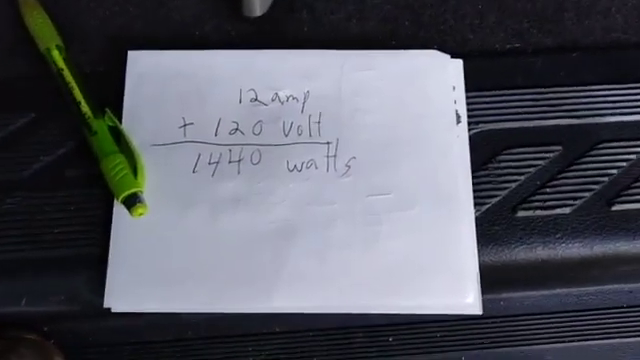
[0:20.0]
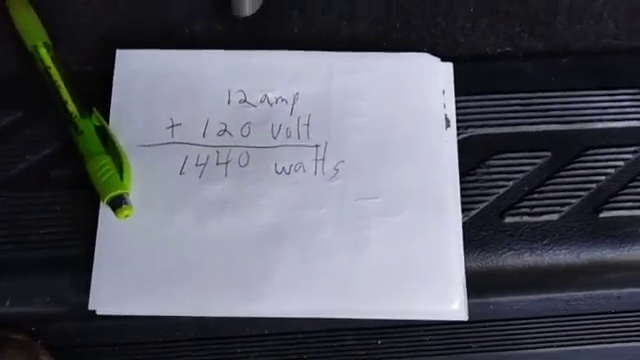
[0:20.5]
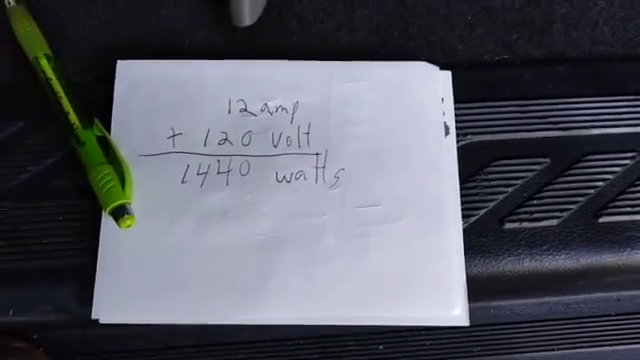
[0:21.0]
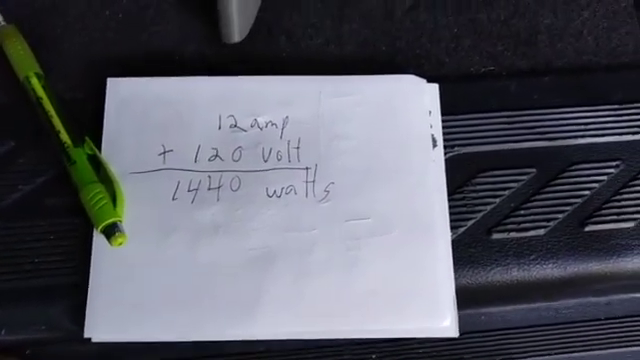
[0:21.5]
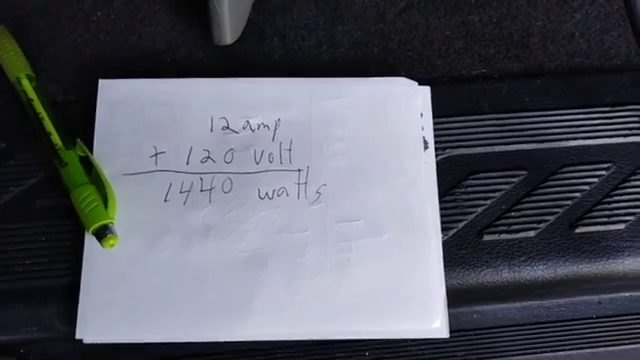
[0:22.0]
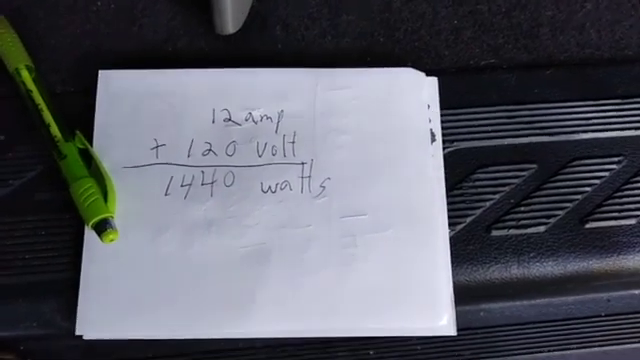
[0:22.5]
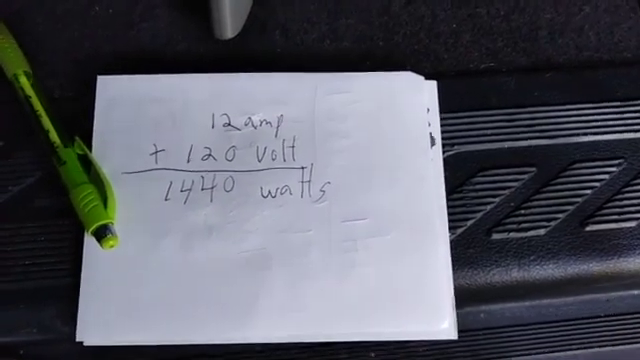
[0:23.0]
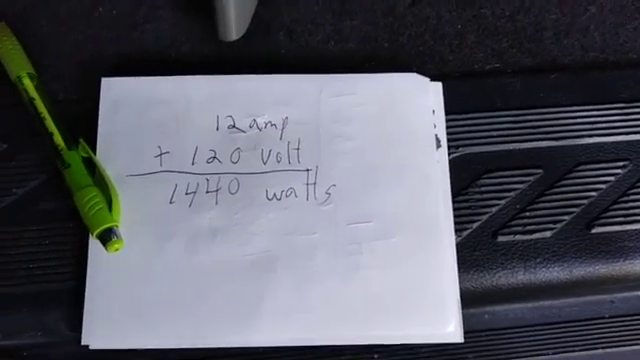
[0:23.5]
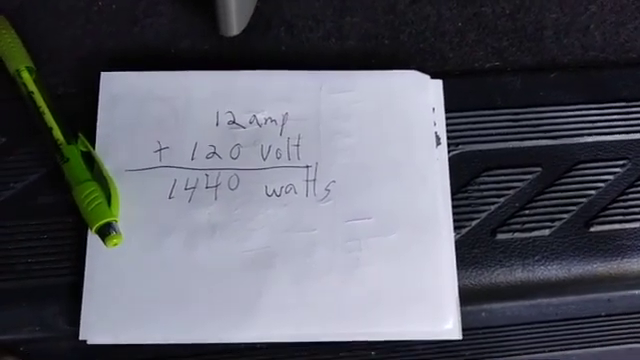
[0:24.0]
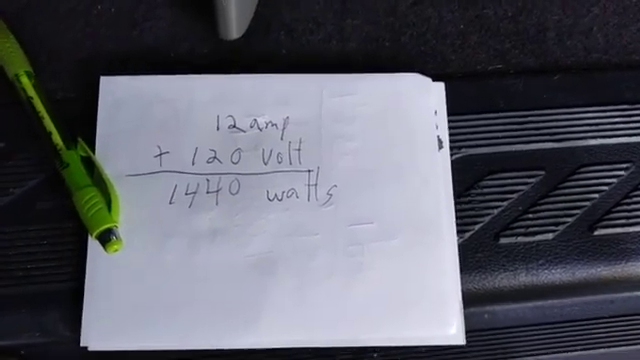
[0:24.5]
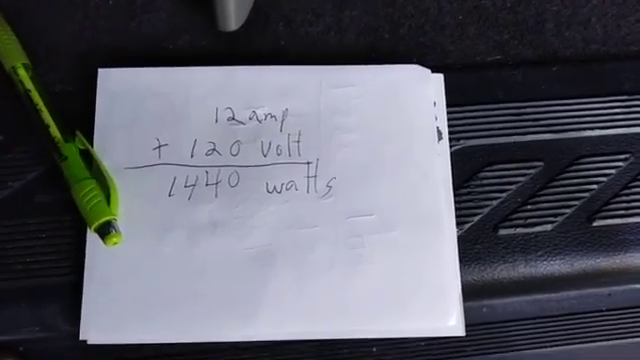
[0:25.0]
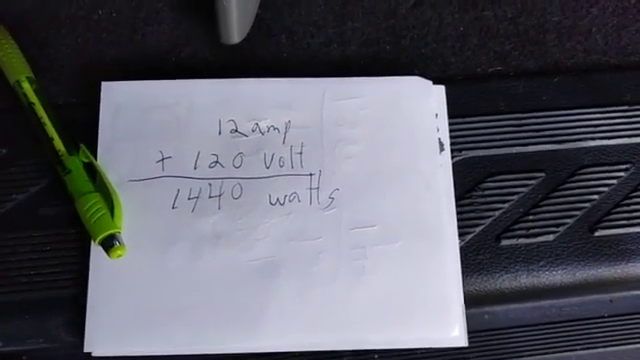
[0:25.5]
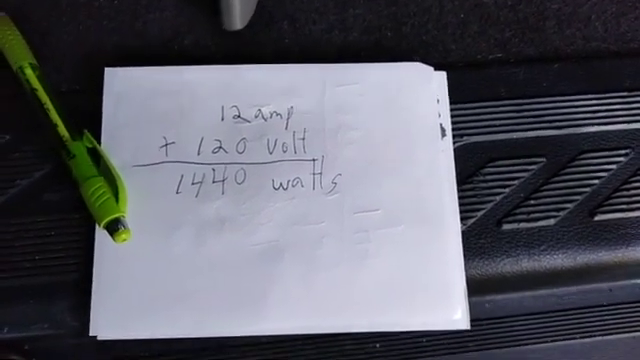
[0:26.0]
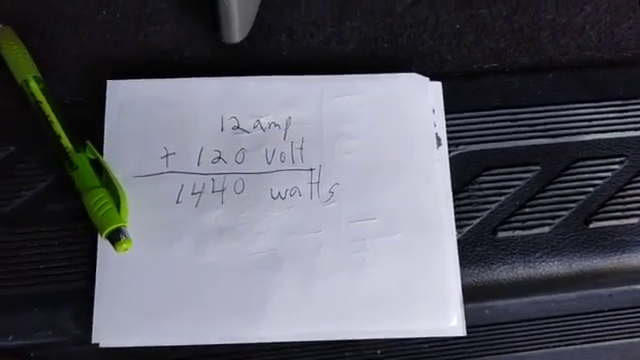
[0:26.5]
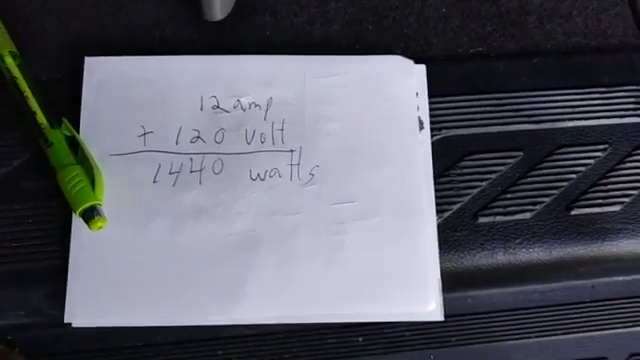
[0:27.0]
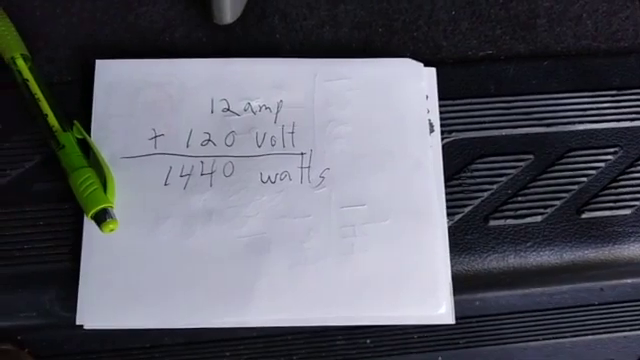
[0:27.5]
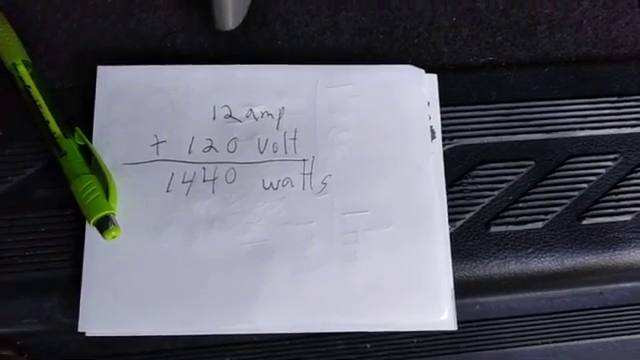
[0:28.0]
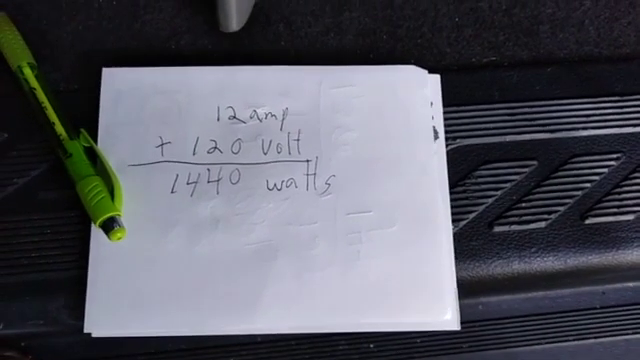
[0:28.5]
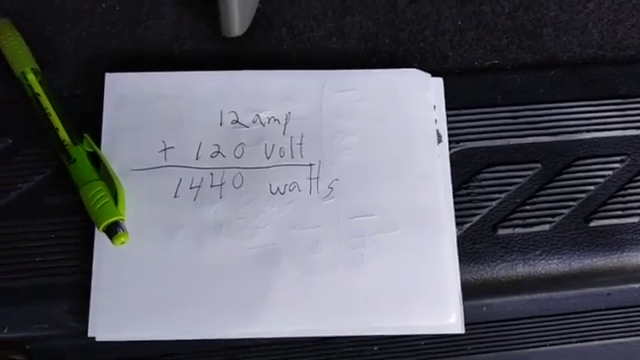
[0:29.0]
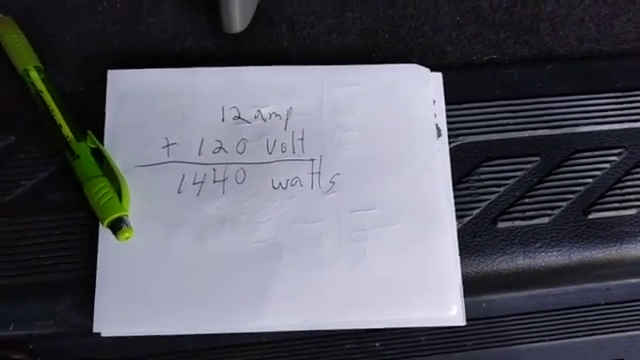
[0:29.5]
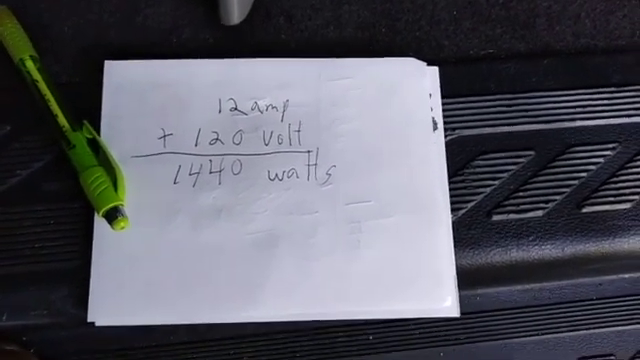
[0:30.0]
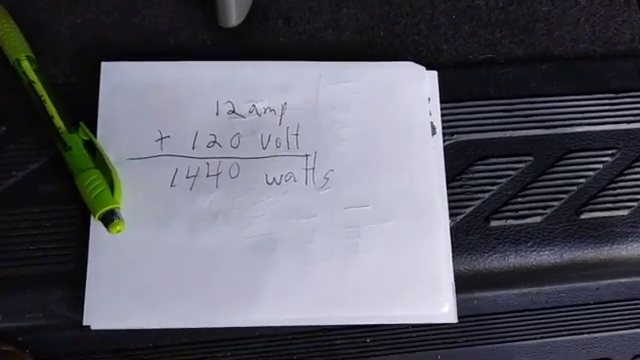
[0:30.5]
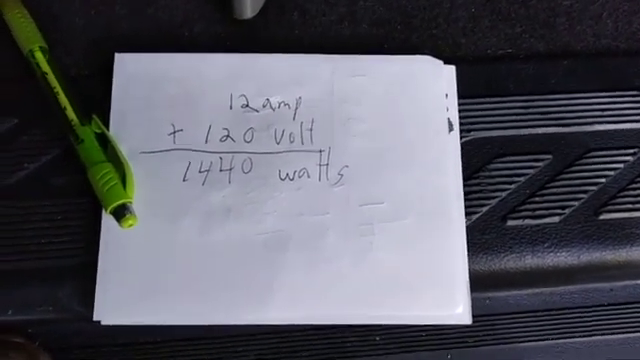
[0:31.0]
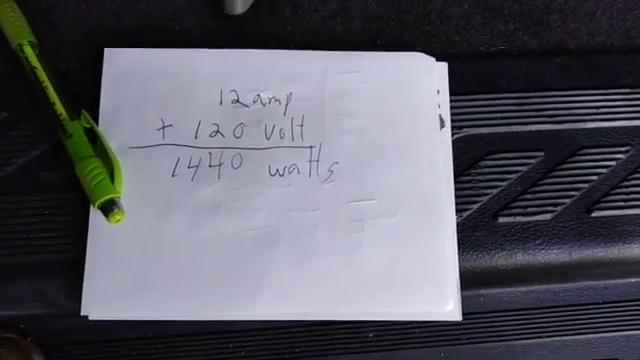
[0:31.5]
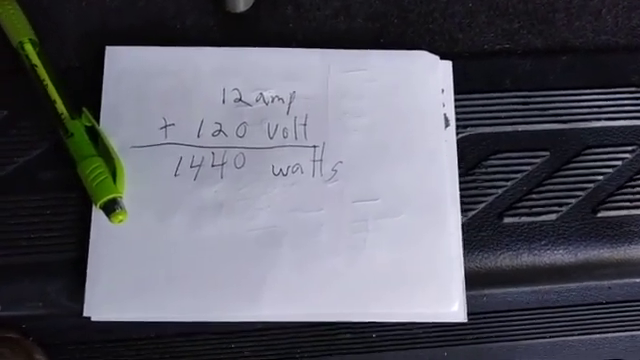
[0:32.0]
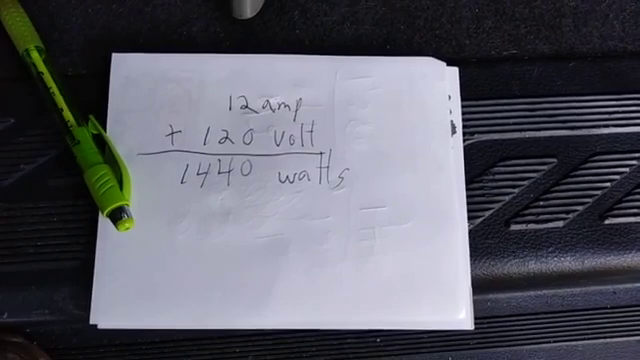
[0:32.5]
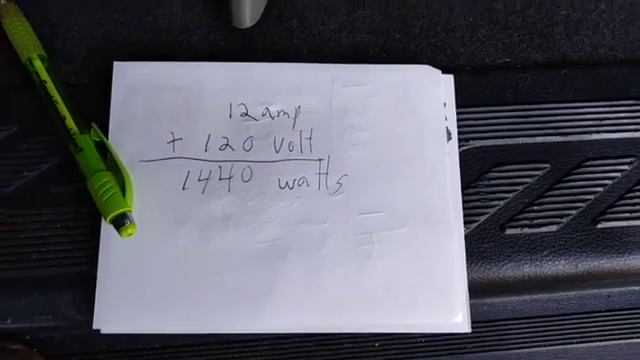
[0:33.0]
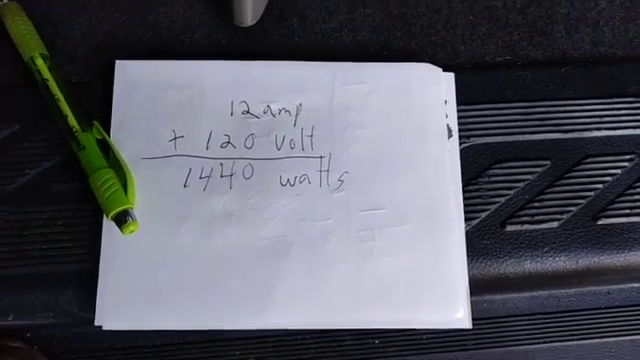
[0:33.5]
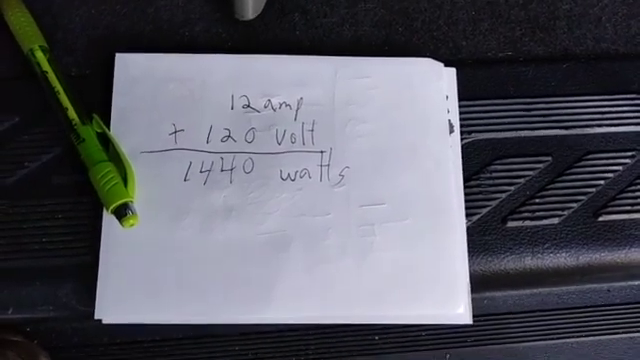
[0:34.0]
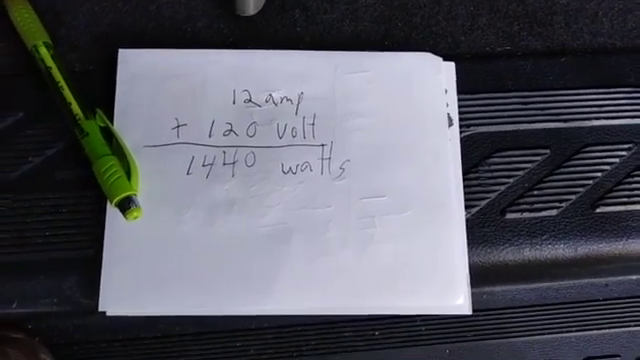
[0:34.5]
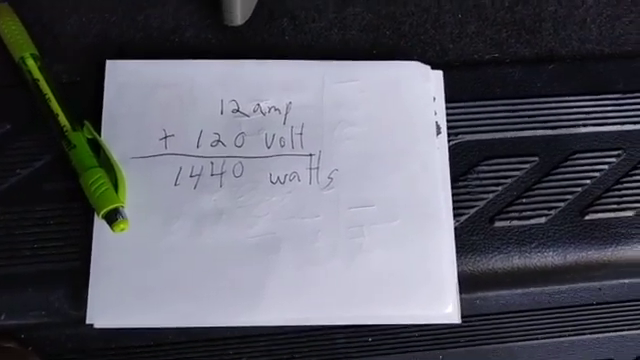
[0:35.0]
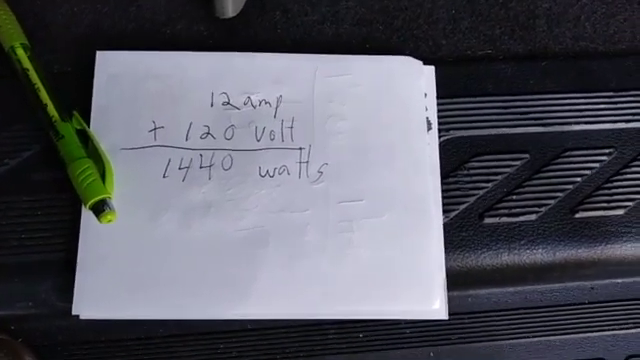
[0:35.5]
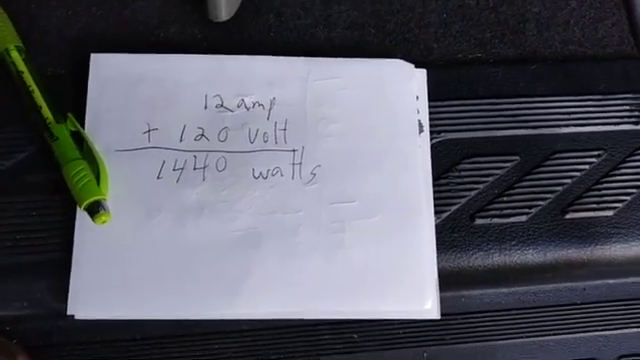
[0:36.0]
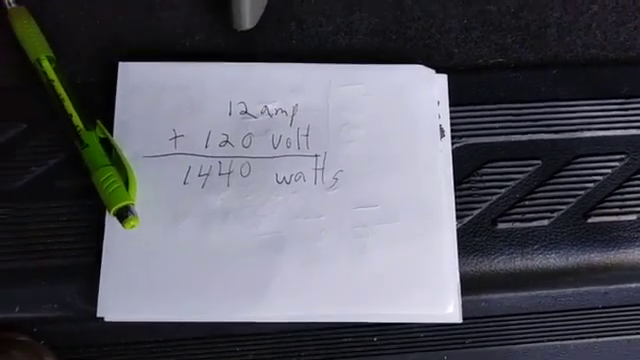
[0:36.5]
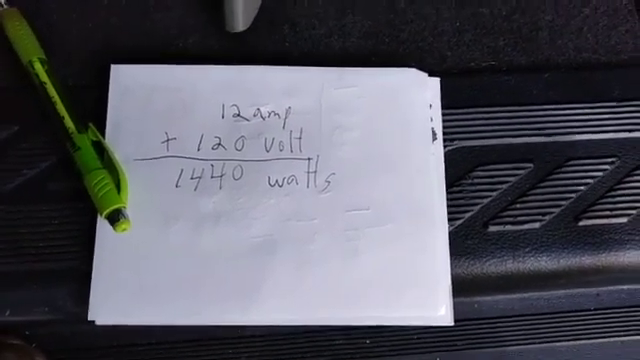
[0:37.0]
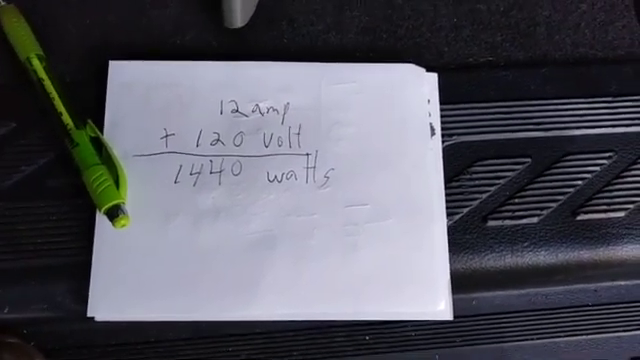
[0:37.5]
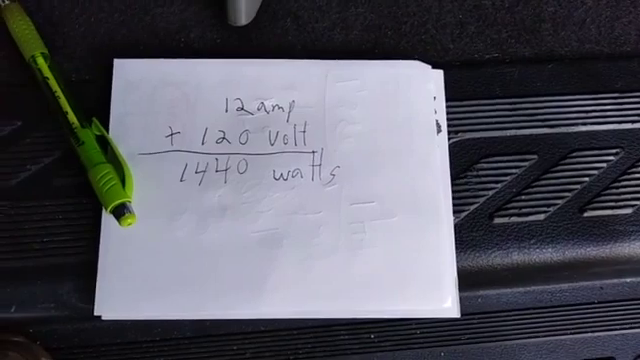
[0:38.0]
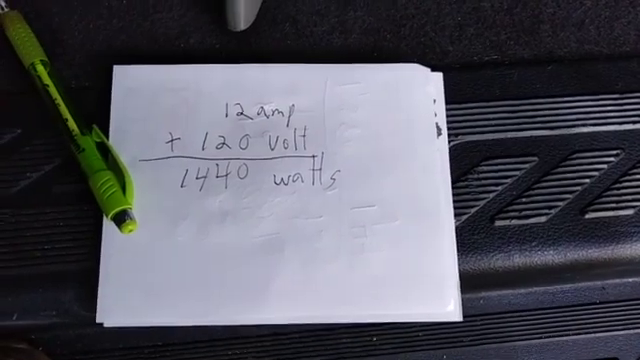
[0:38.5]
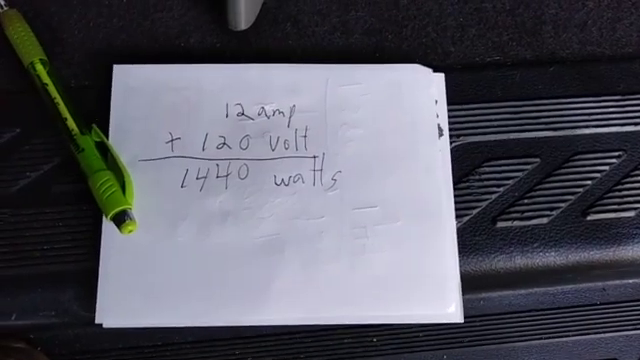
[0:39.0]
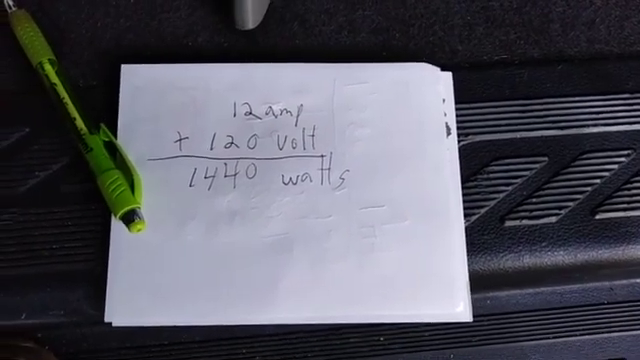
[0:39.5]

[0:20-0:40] The camera focuses on the white piece of paper, which is square and like a Post-it note but a little bigger. At the top it reads "12 amp", below that "+ 120 volt", then a line across, and below that "1440 watts". The paper is lying on top of the floor mat on the floorboard of the van, probably at the passenger seat. The neon yellowish-green pen or pencil lies horizontally, with the clicker end touching the paper and the other part on the floorboard.